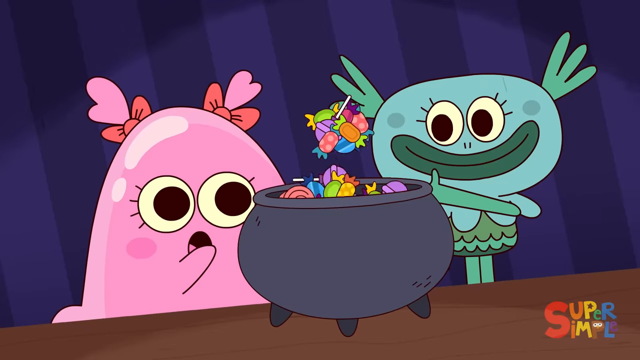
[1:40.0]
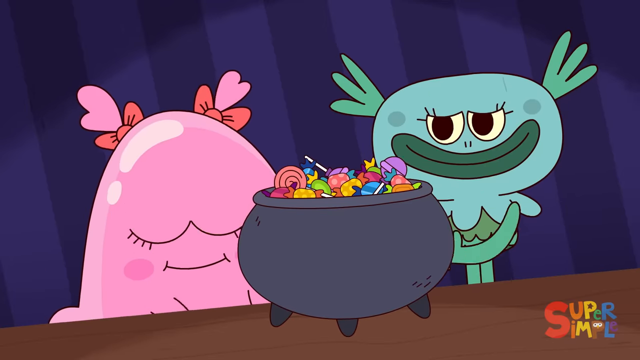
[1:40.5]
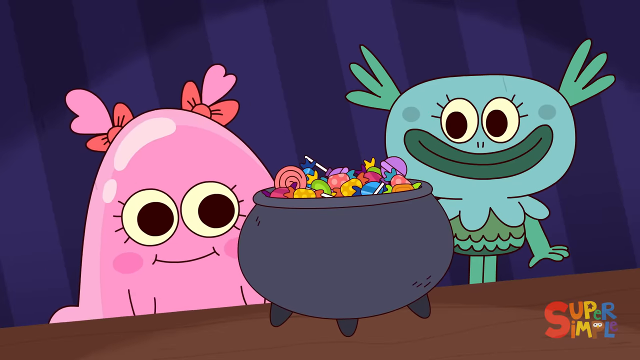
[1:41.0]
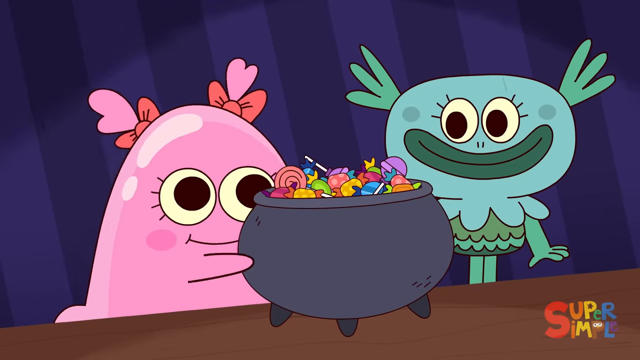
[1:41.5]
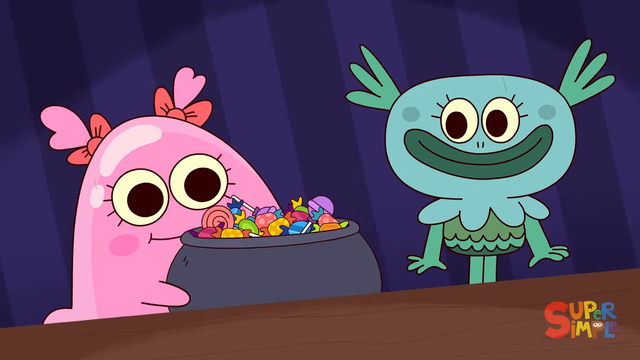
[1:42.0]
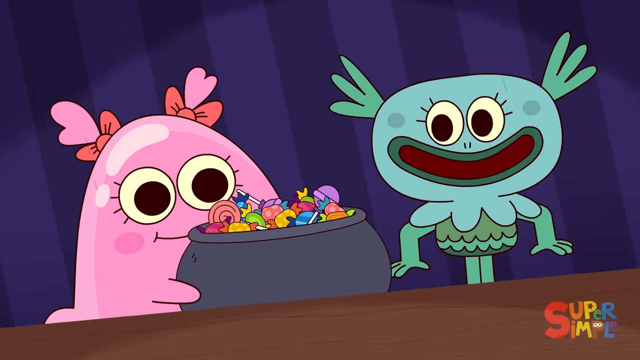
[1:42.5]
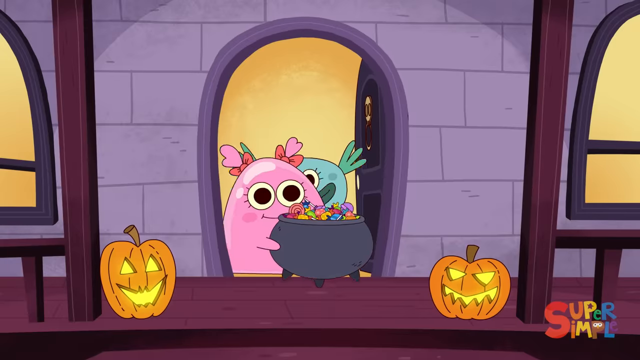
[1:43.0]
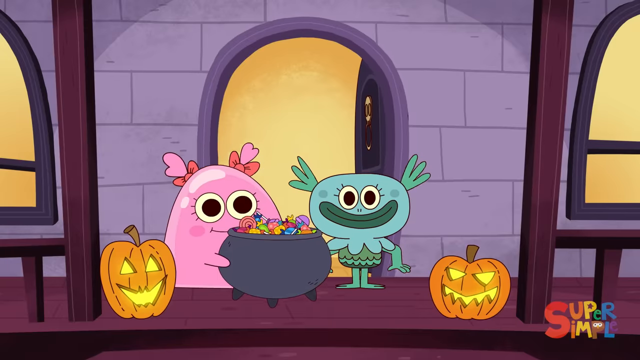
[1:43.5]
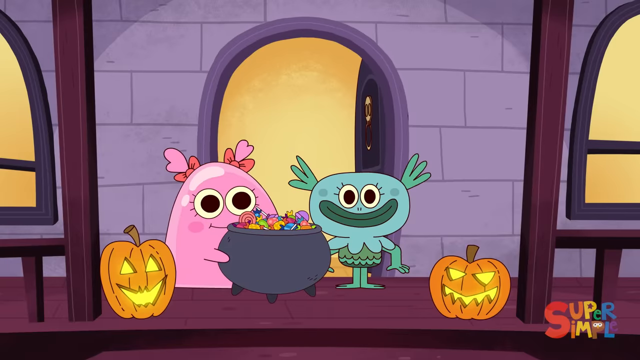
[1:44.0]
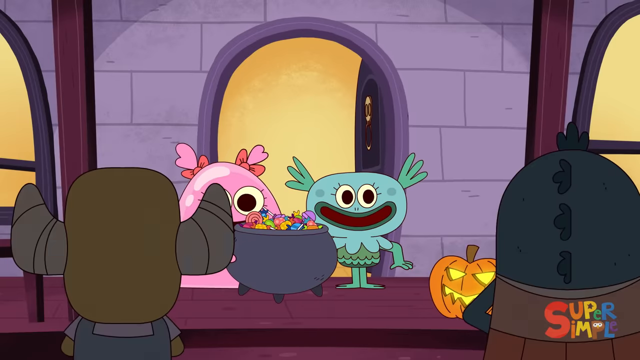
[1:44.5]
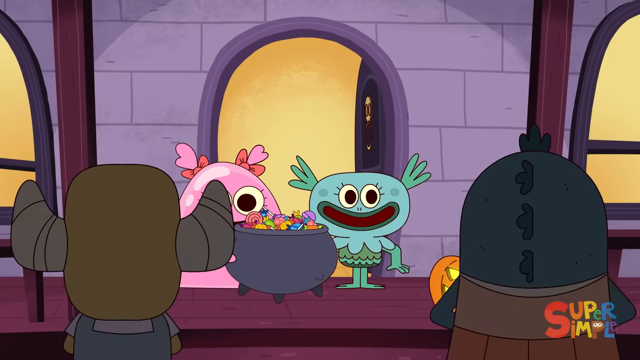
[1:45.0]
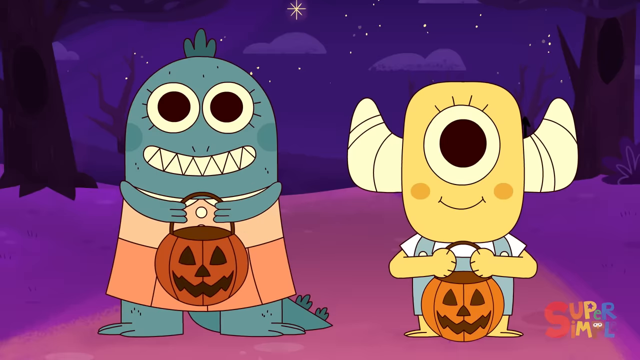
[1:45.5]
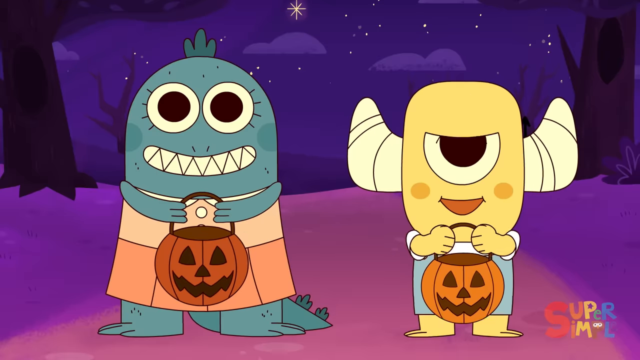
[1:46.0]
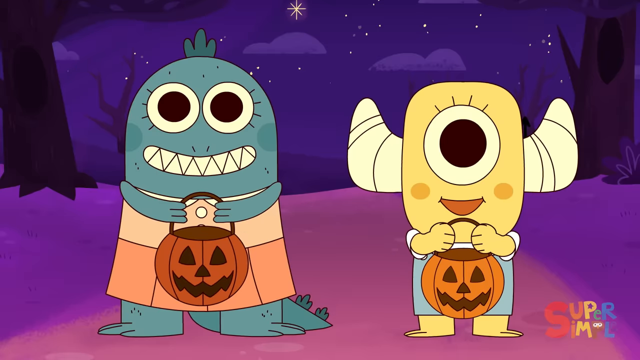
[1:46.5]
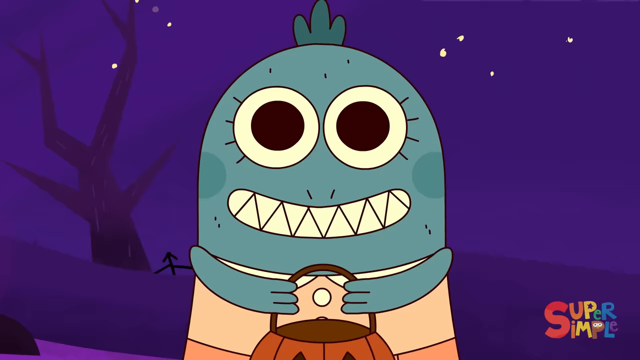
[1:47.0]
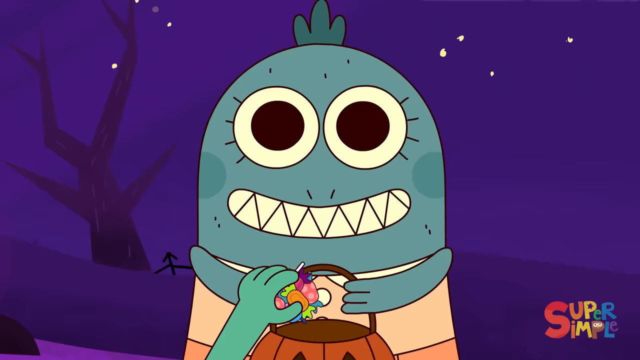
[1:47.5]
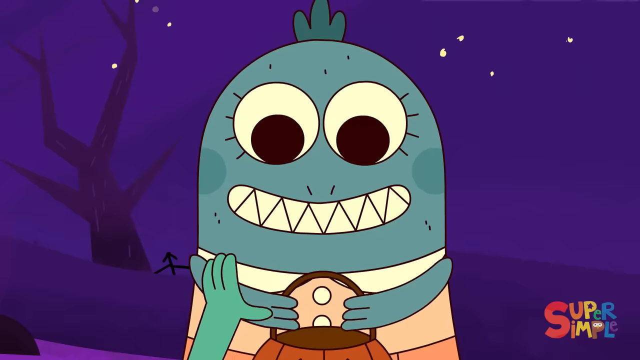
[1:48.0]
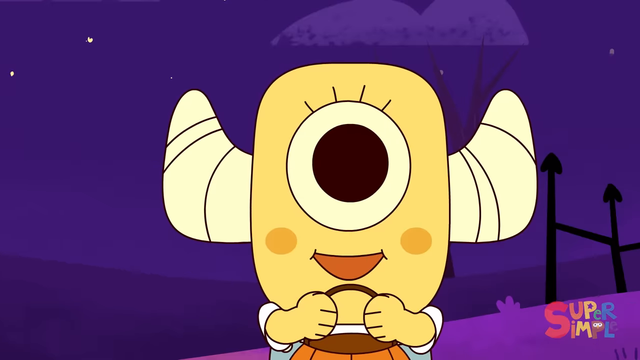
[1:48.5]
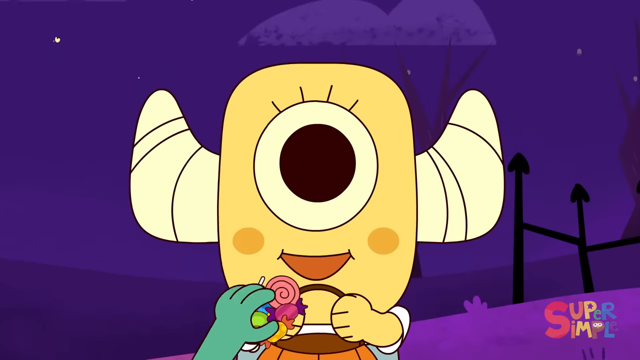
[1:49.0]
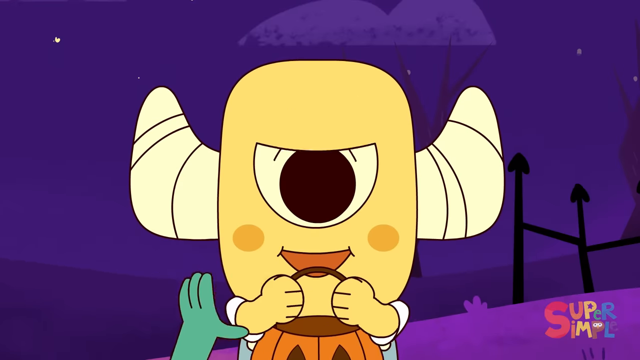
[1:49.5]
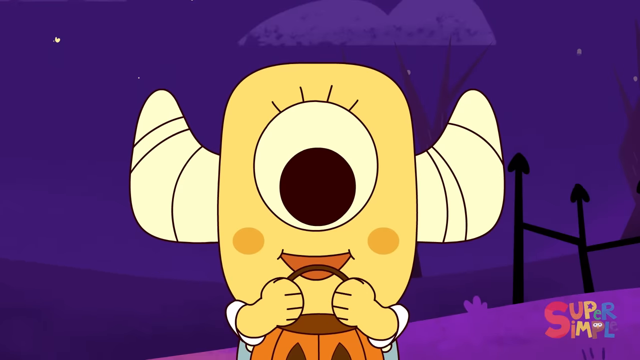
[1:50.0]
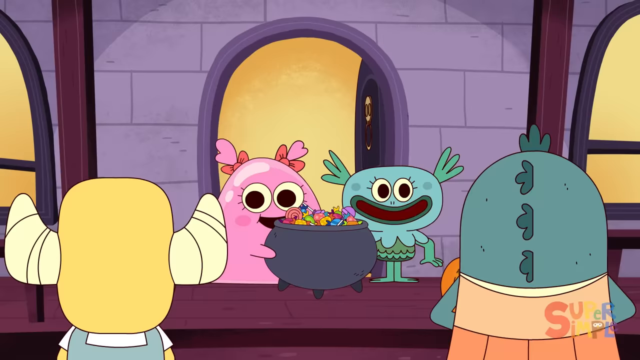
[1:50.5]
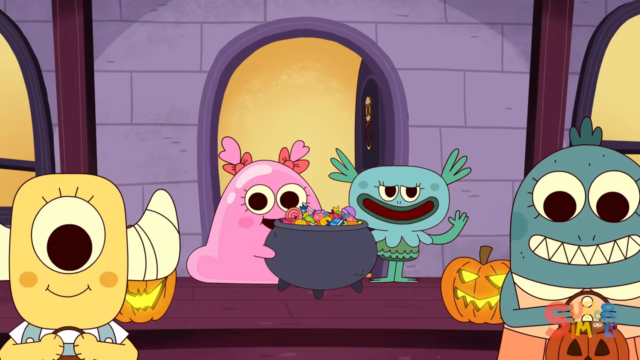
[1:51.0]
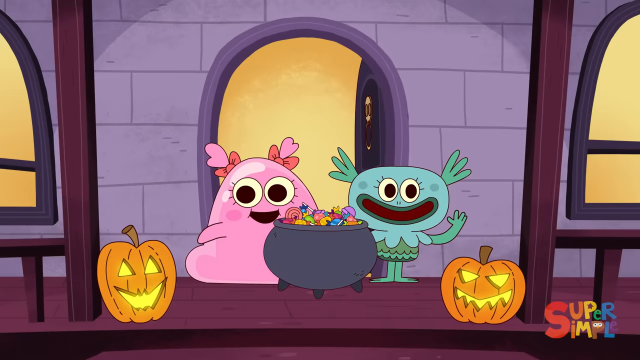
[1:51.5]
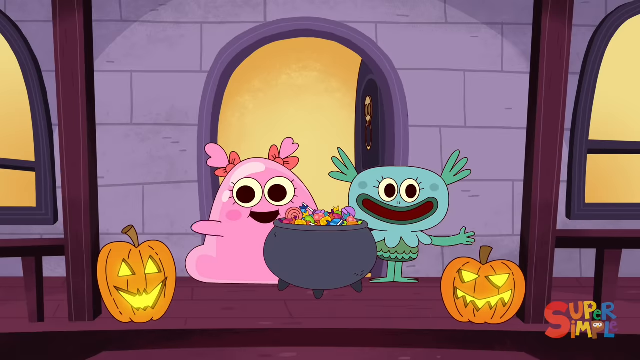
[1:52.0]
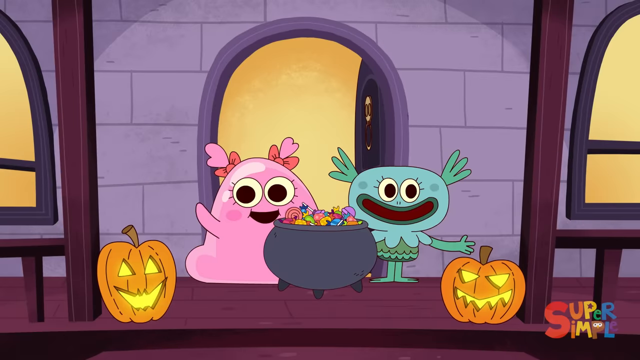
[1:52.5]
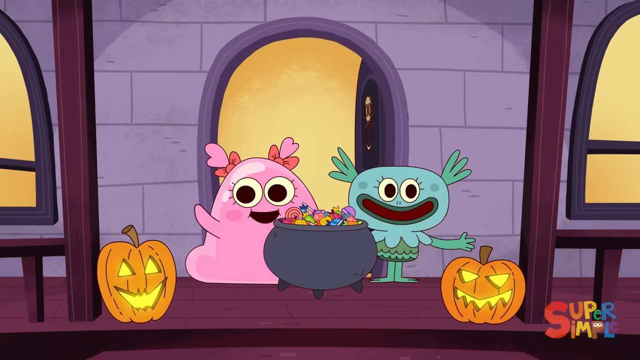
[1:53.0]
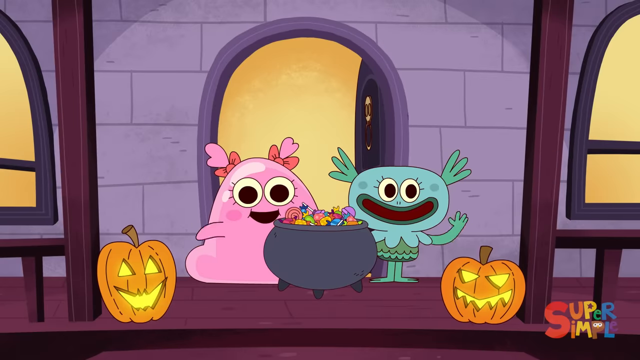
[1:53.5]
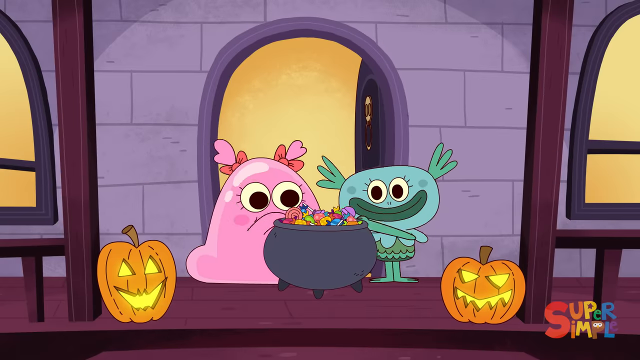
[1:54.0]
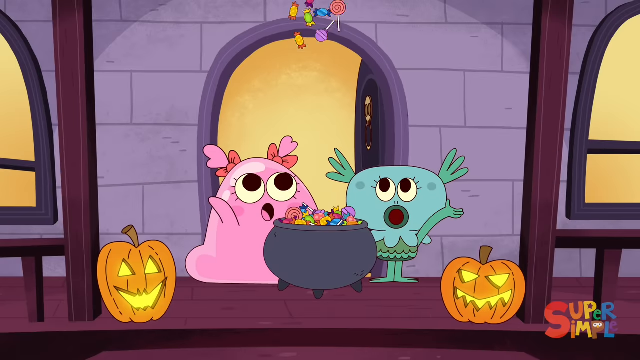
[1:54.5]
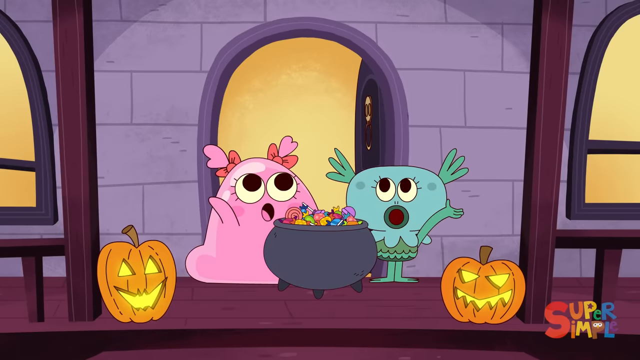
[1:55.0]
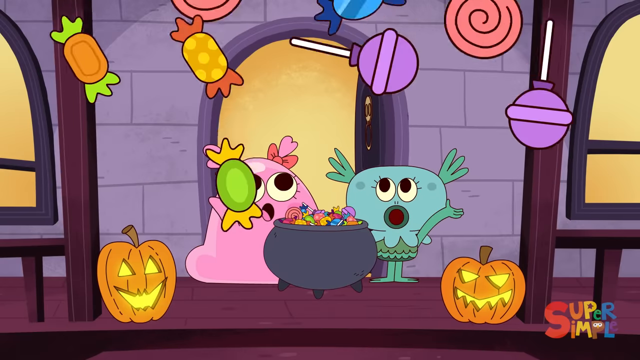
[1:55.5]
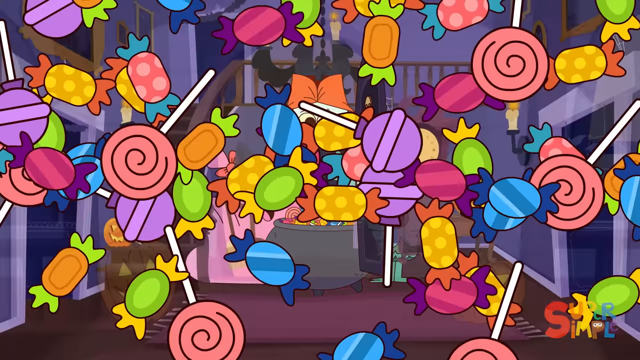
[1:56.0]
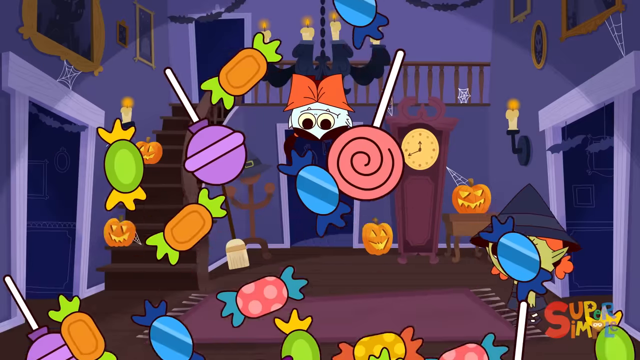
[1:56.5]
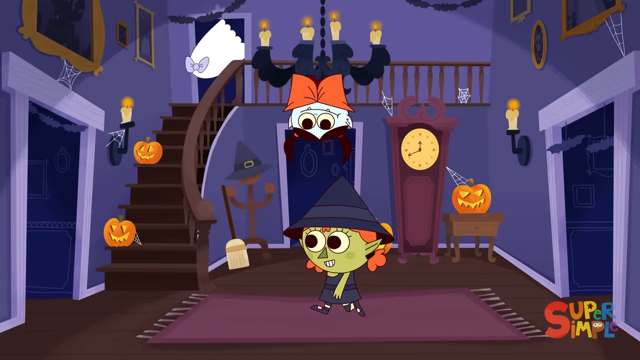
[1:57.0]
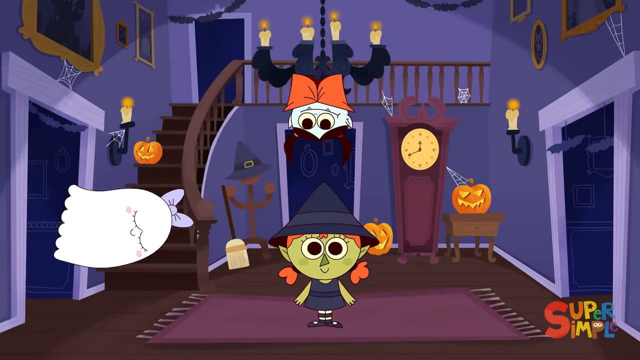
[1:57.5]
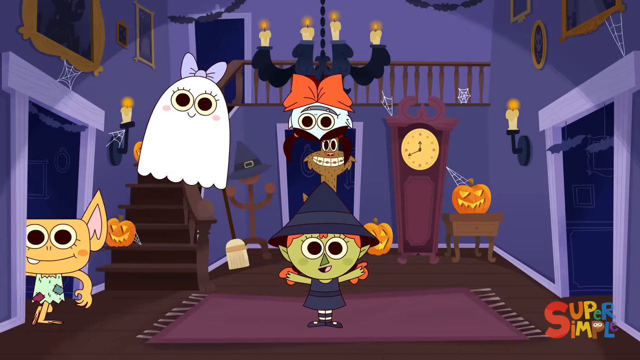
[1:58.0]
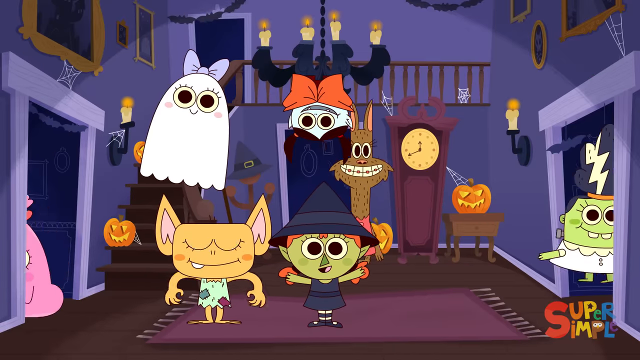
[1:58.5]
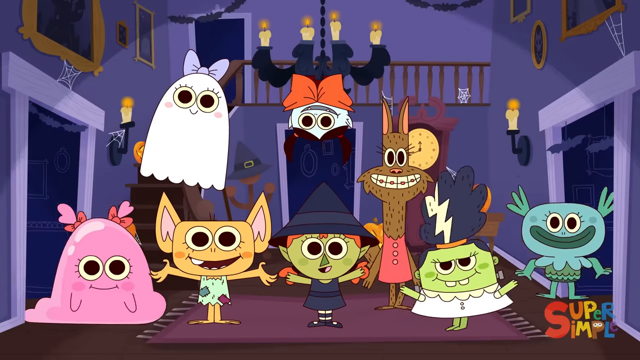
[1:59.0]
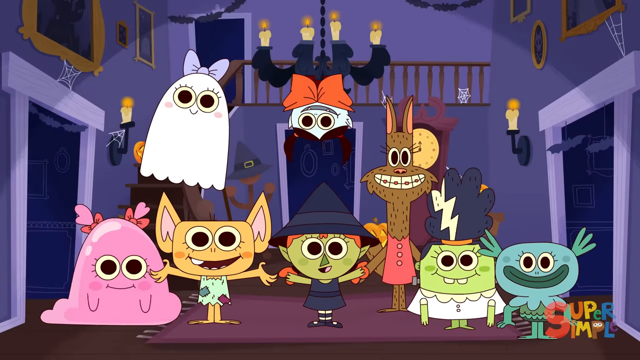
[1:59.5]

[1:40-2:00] The pink creature on the left and the sea creature on the right, which is kind of a bluish-teal assortment of colors, gather candy in a cauldron or pot. Various assorted lollipops, suckers and pieces of gum are visible. The pink creature lifts the cauldron off the dining room table. The scene cuts to the pink creature and the sea creature taking the cauldron outside to the front porch, apparently leaving it out for trick-or-treaters. Instantly two trick-or-treaters show up: a teal-colored creature and a cyclops-type creature with two horns coming out of either side of its head, kind of yellow-shaded. Both have little plastic pumpkins for collecting candy. They head off with their candy, satisfied, and the pink and sea creatures on the porch wave goodbye. Then each grabs a couple of pieces of candy and throws them at the camera, which wipes the scene.